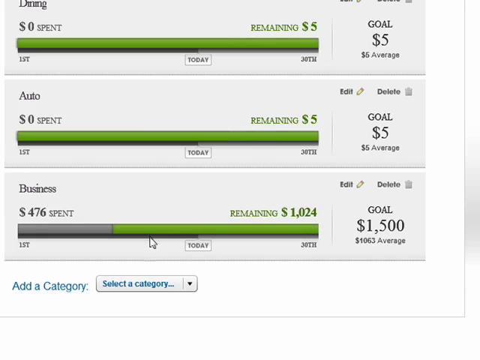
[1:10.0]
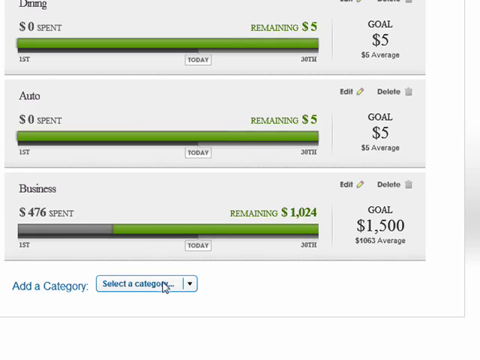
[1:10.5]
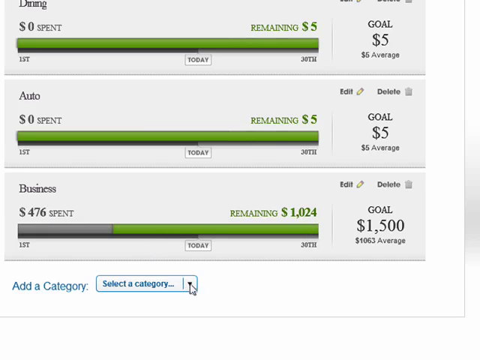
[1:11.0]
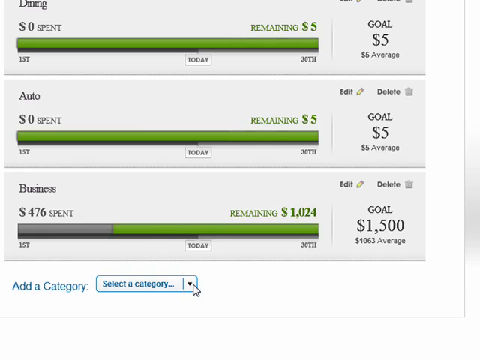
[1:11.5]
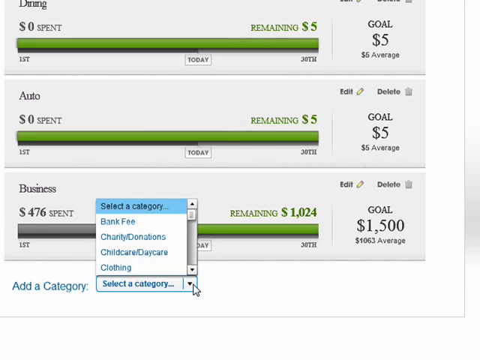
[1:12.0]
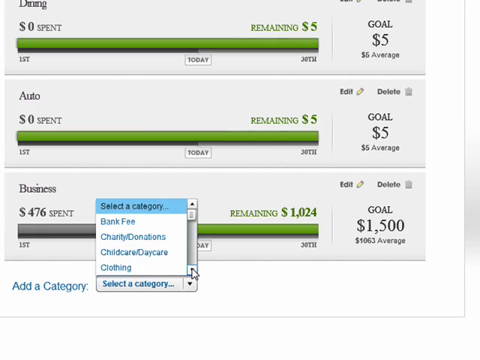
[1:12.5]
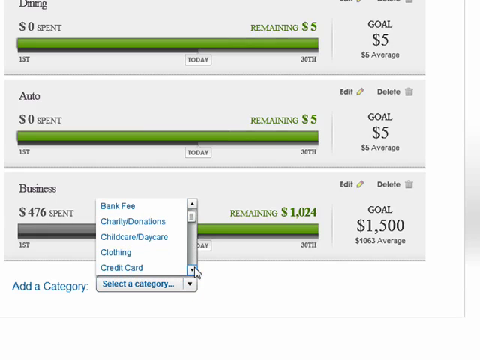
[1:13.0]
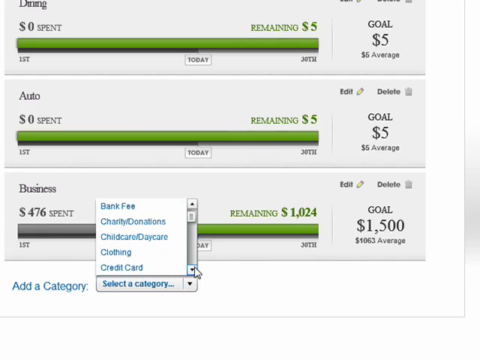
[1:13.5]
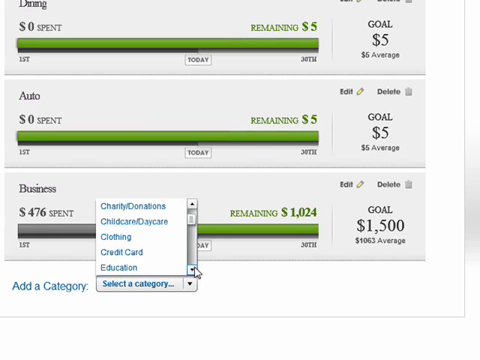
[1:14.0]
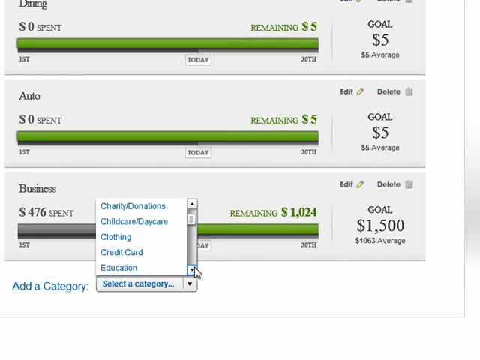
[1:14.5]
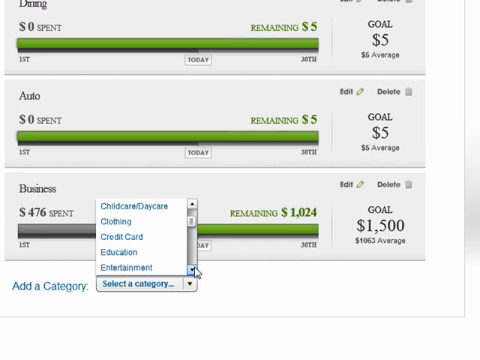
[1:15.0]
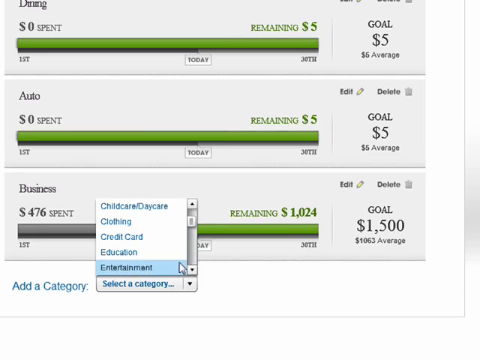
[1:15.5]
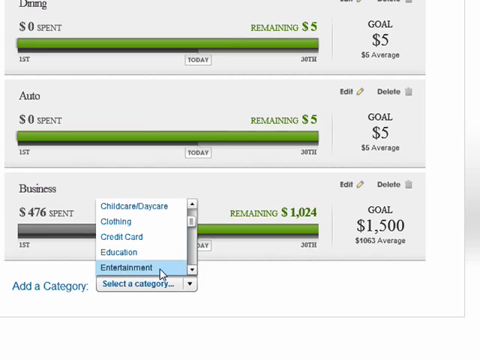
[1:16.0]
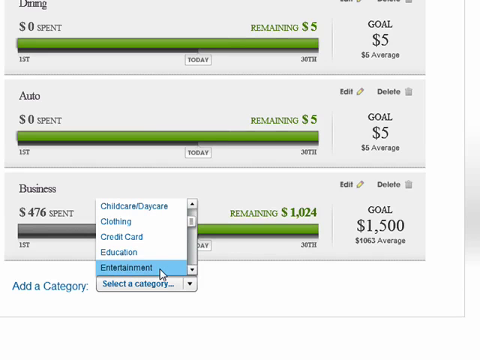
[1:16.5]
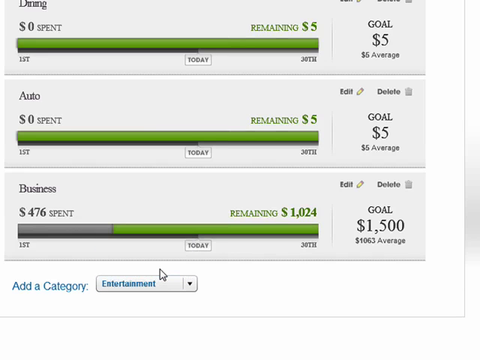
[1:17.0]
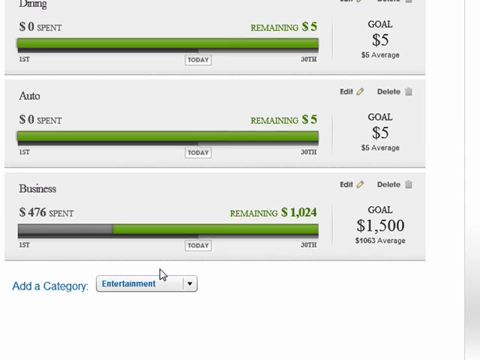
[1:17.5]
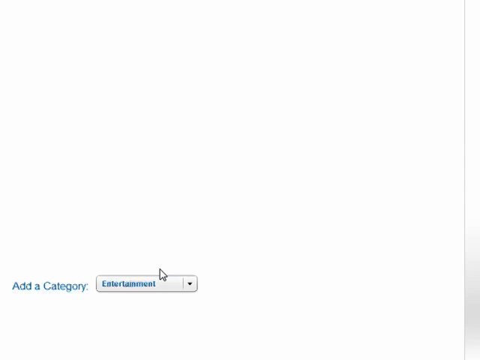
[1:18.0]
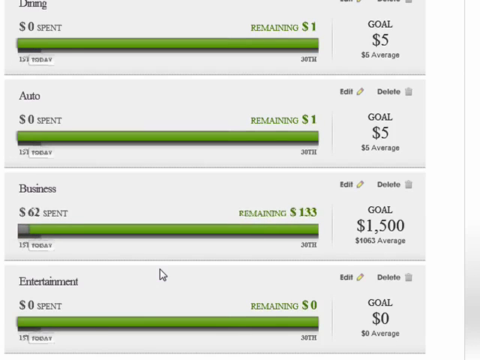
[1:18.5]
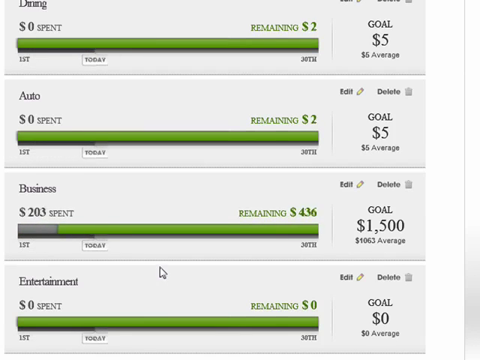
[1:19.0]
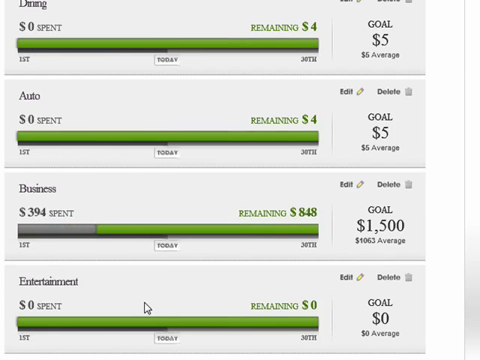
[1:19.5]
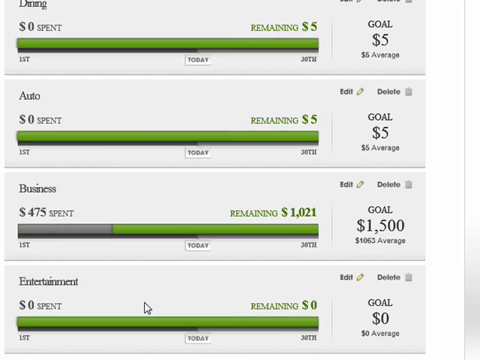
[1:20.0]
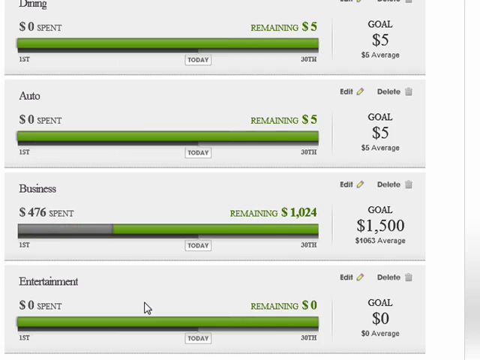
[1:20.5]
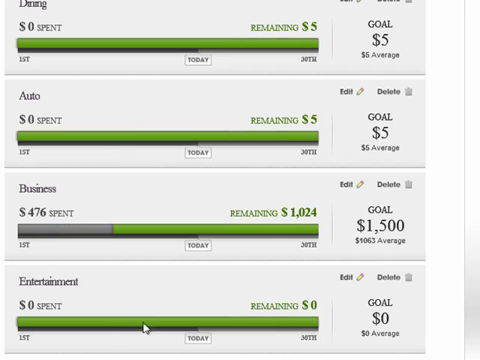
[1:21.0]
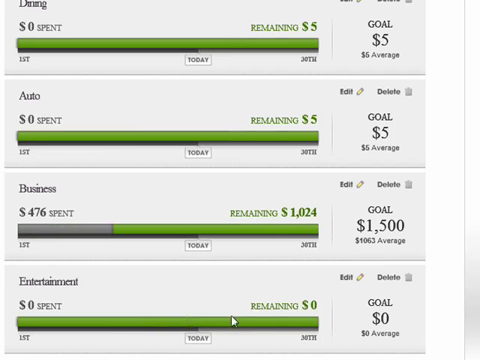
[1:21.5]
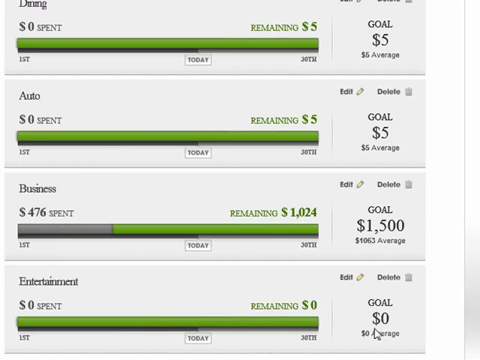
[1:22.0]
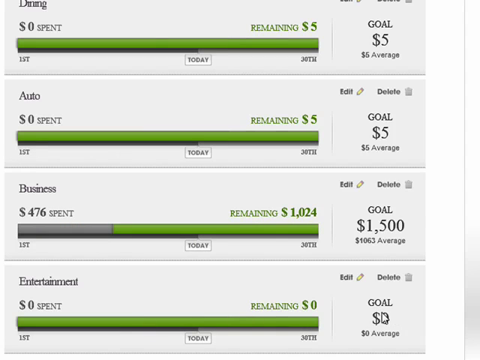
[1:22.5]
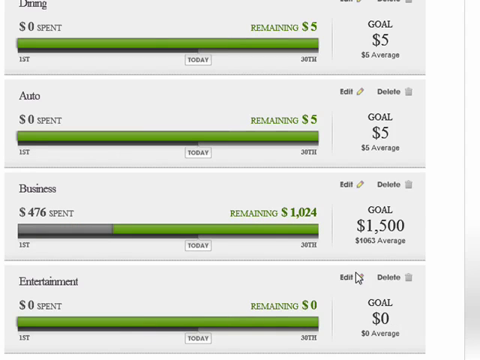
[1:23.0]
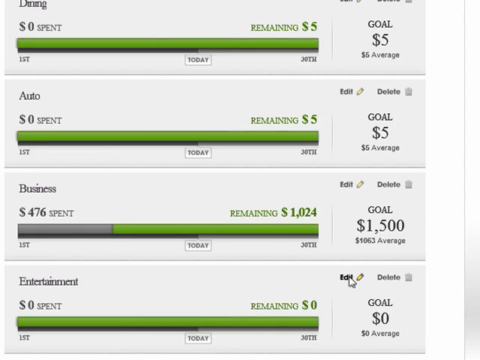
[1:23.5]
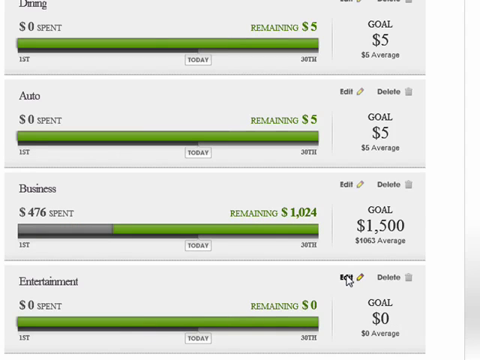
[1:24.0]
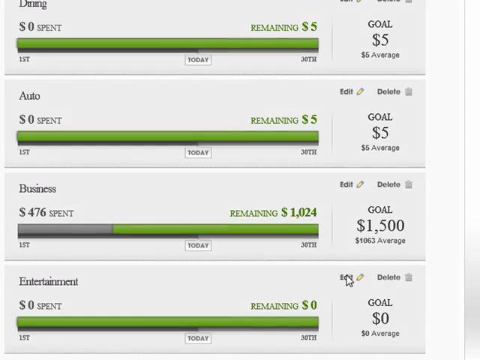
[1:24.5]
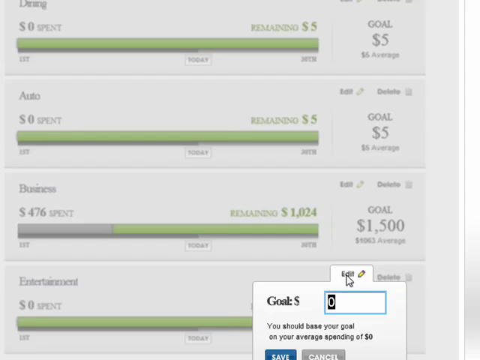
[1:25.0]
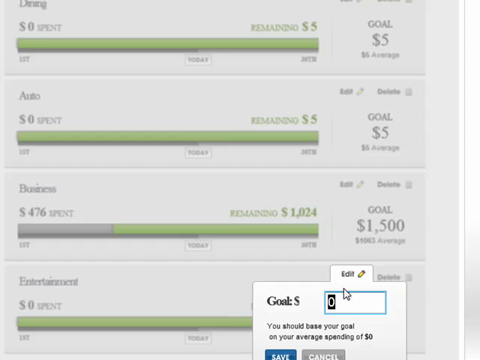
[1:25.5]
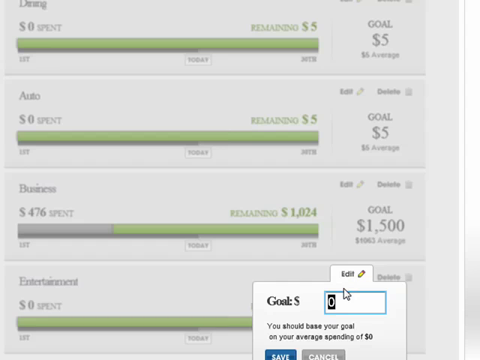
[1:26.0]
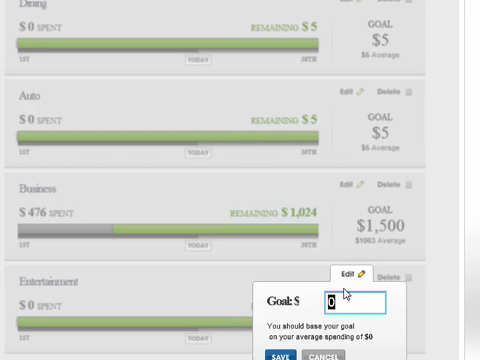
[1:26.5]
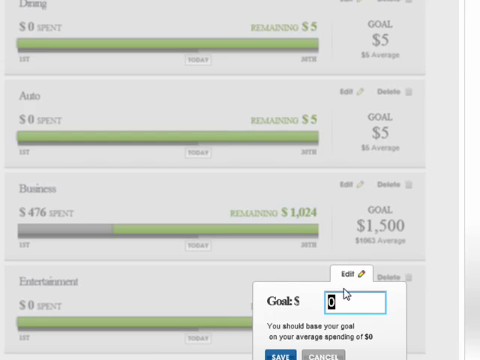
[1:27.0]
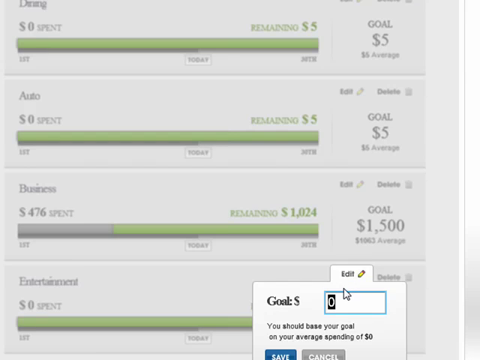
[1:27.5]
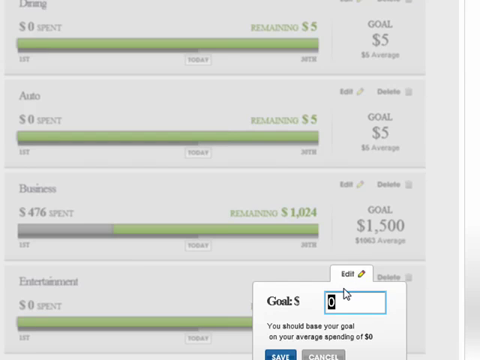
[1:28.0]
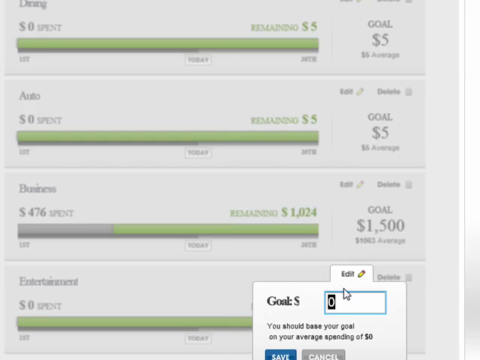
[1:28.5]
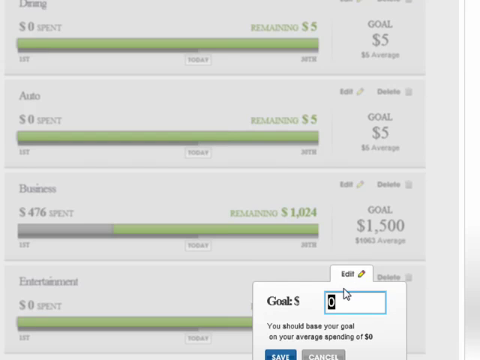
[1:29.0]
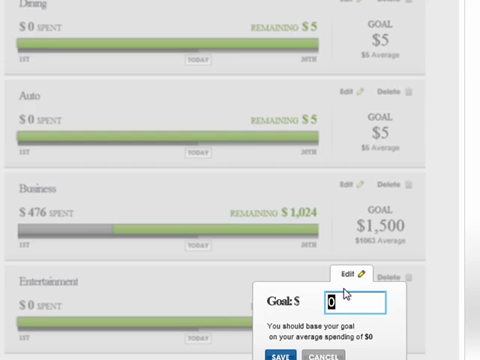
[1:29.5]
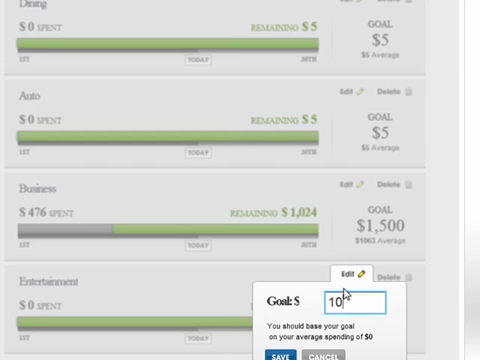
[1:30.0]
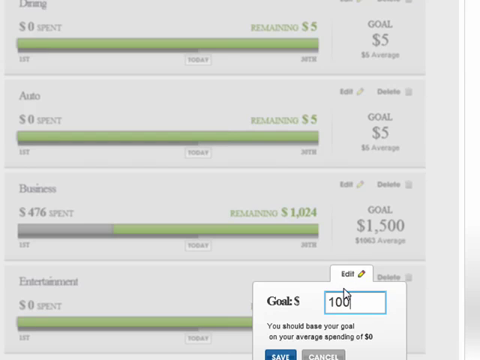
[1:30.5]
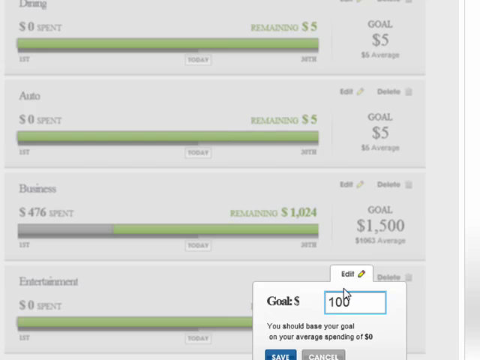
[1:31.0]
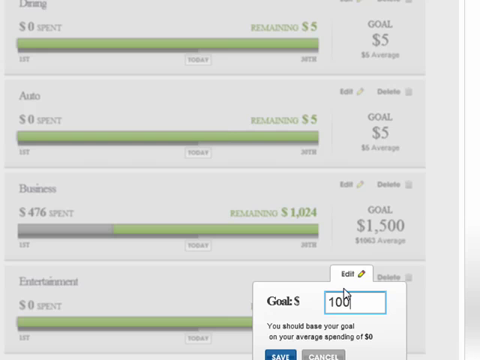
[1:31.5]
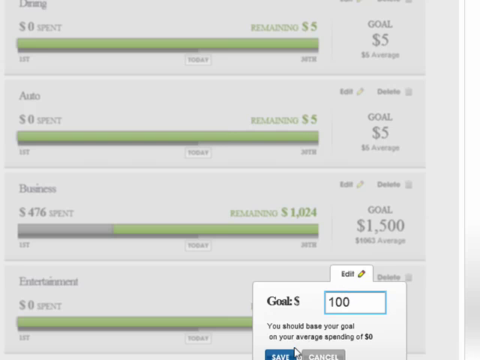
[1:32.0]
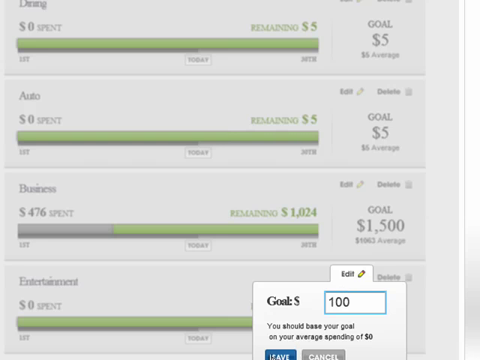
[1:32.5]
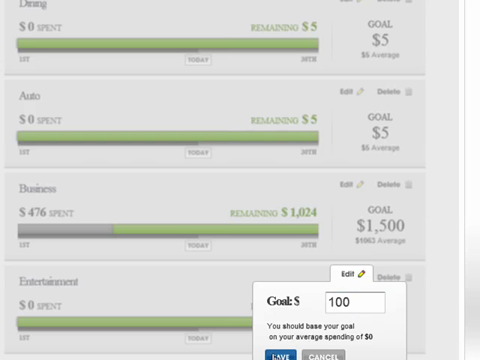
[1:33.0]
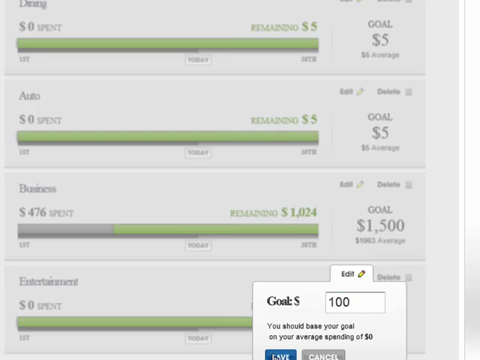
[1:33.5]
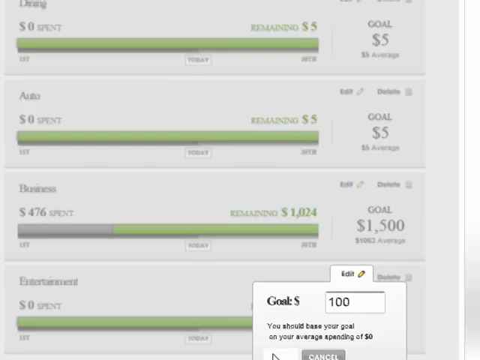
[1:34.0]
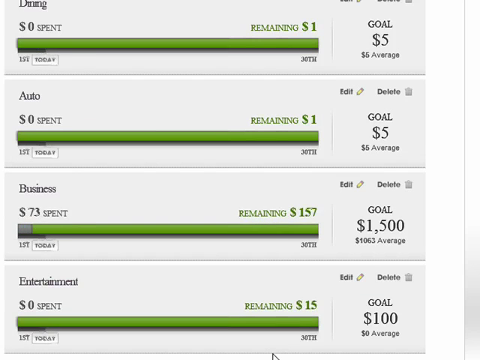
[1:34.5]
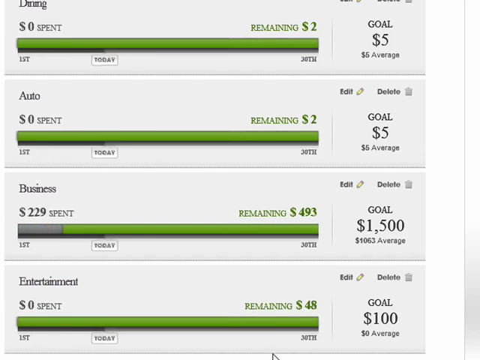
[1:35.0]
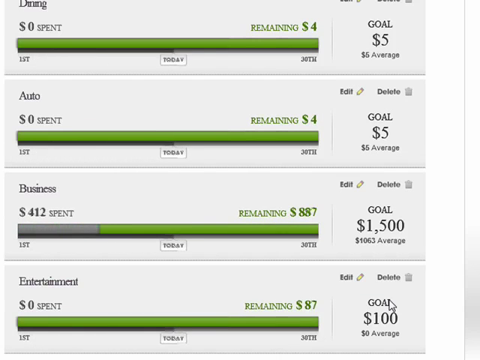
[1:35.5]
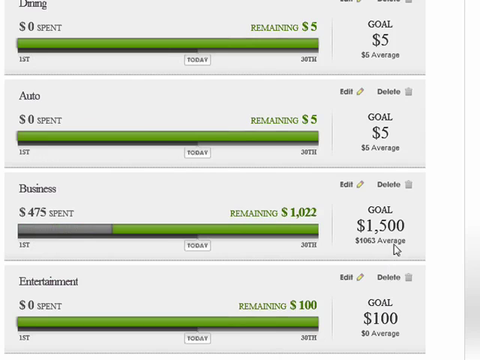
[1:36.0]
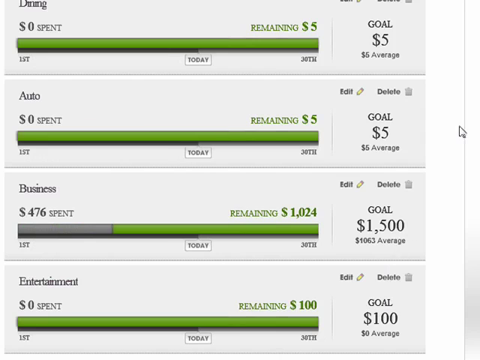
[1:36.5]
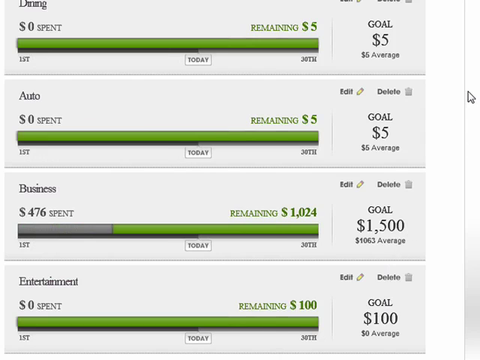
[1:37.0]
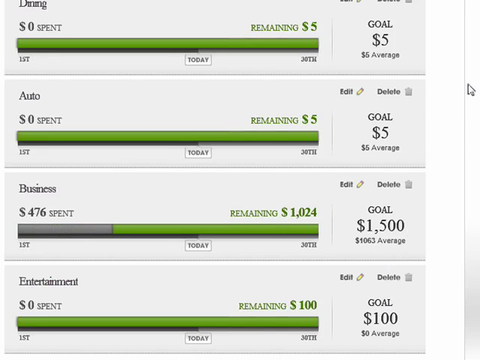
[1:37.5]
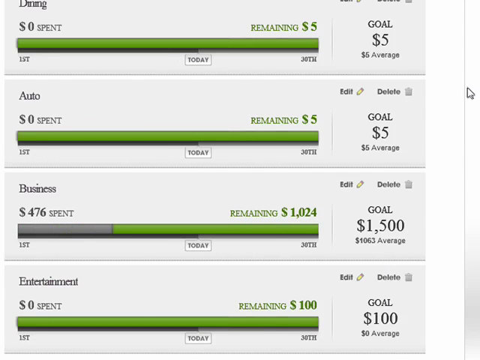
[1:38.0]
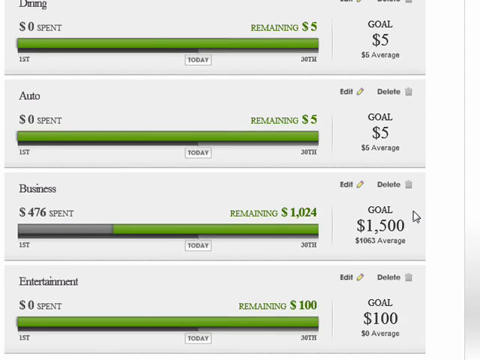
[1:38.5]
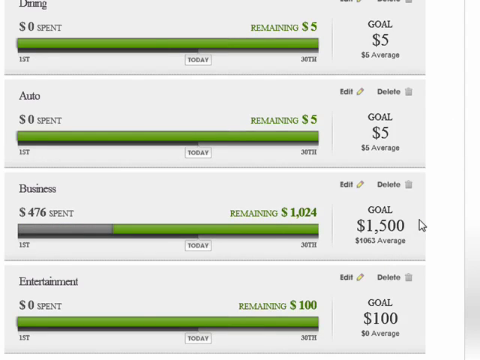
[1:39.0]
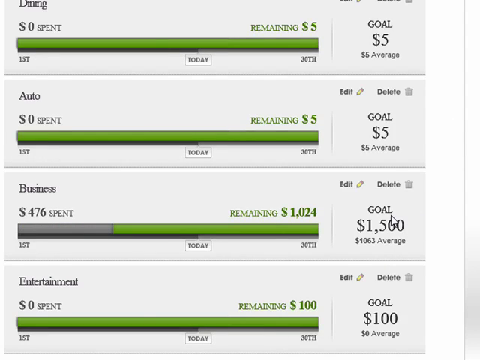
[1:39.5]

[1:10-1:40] The user clicks the add a category button once more, and "select a category" appears. The user scrolls down through the options, which are in alphabetical order, past the C options, then scrolls a little more and clicks the option "entertainment". For Entertainment, the spent and goal amounts are both $0, so the whole bar is green. The user clicks the edit button at the top left corner of that section and changes the goal, apparently typing 100, then clicks the blue save button below. The remaining amount is $100, and Entertainment becomes the new category.